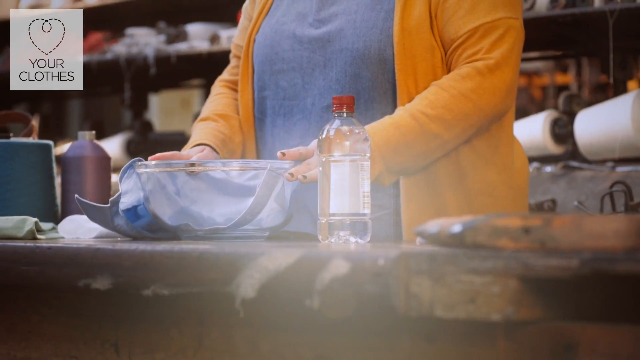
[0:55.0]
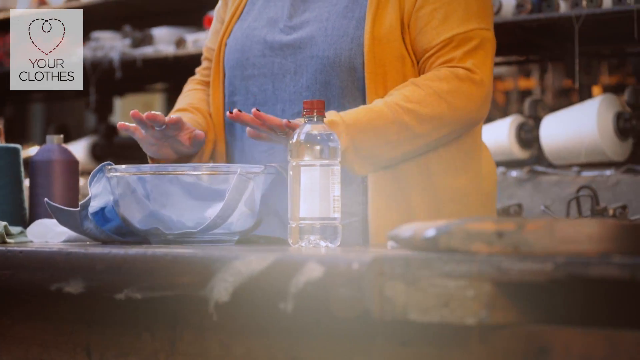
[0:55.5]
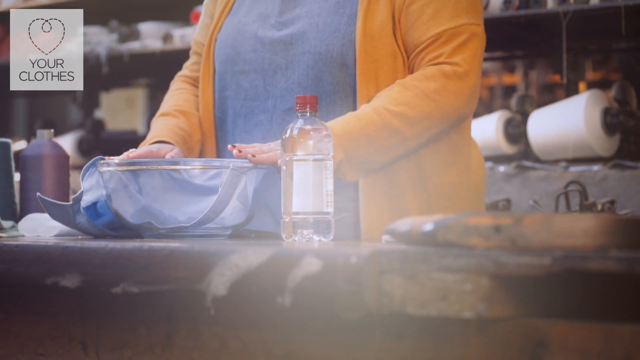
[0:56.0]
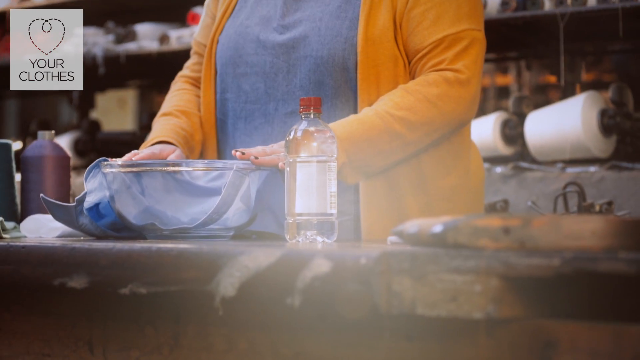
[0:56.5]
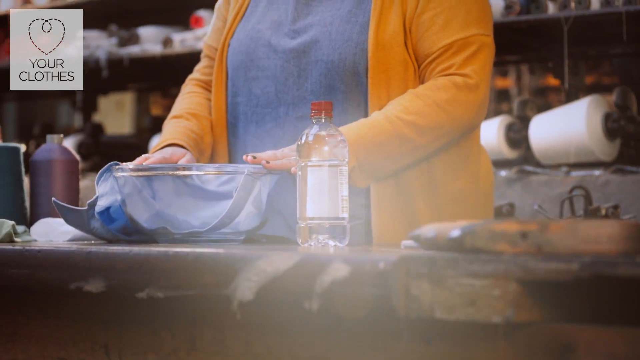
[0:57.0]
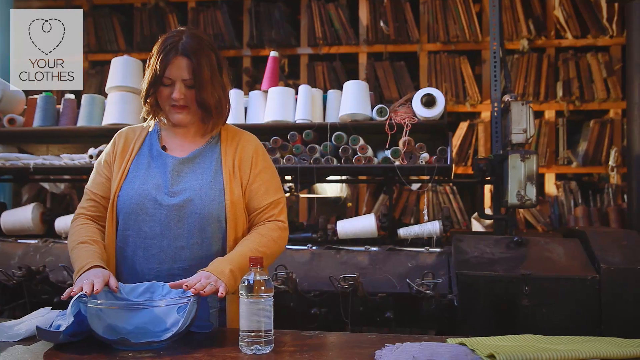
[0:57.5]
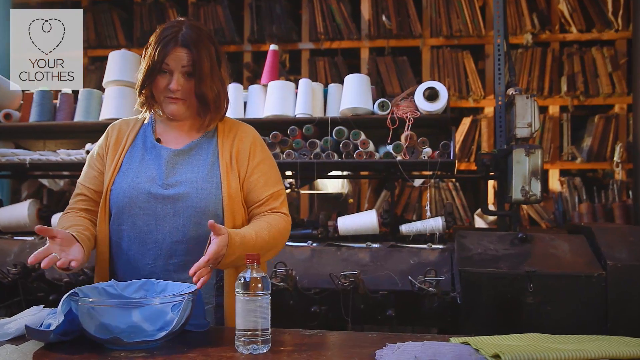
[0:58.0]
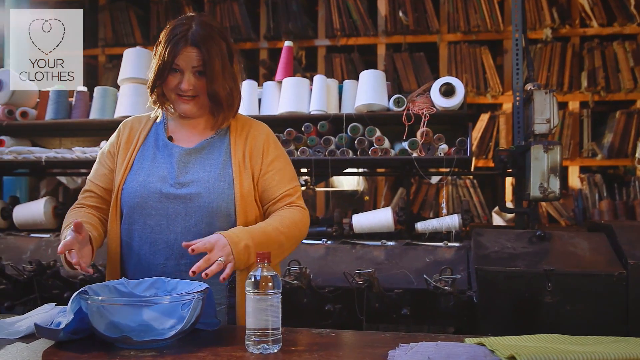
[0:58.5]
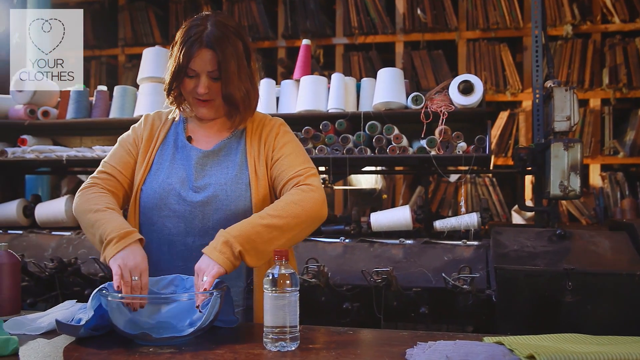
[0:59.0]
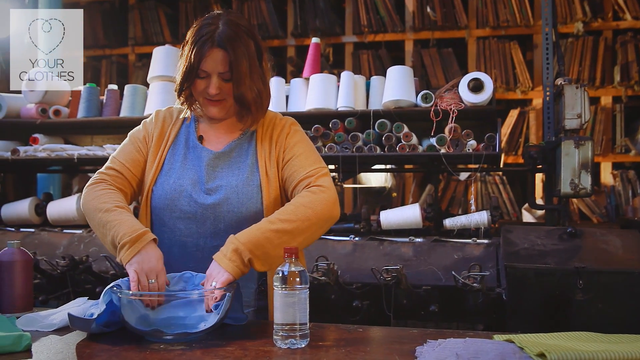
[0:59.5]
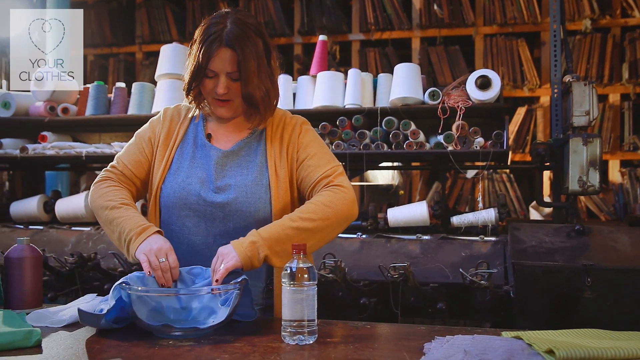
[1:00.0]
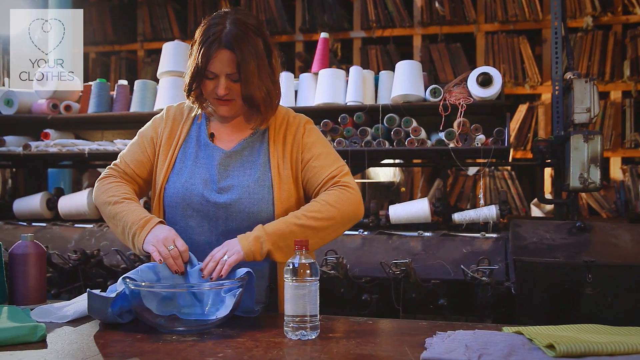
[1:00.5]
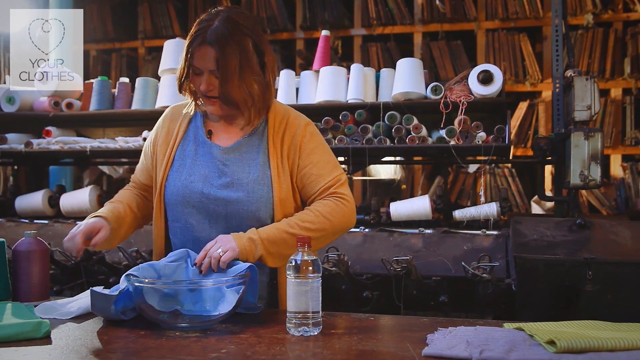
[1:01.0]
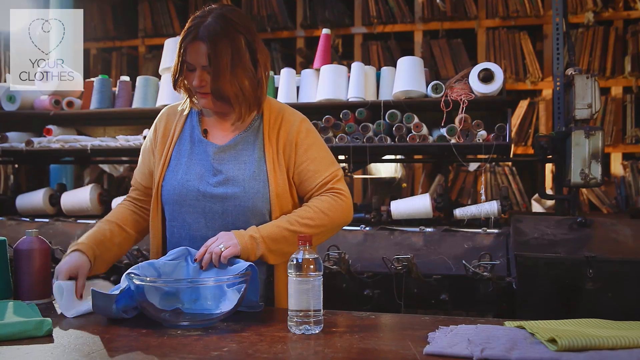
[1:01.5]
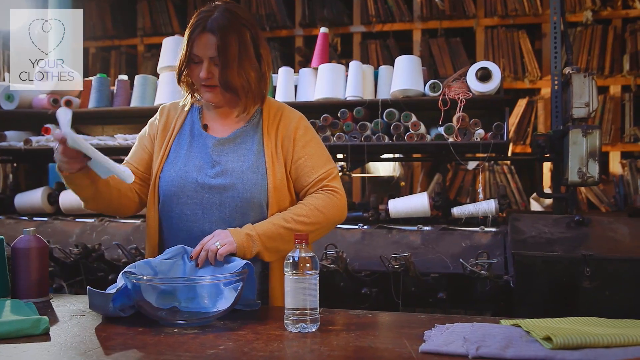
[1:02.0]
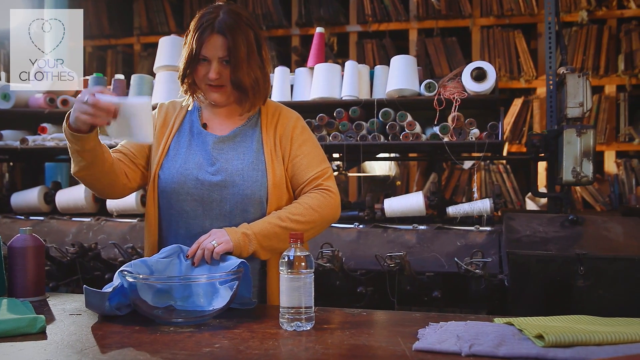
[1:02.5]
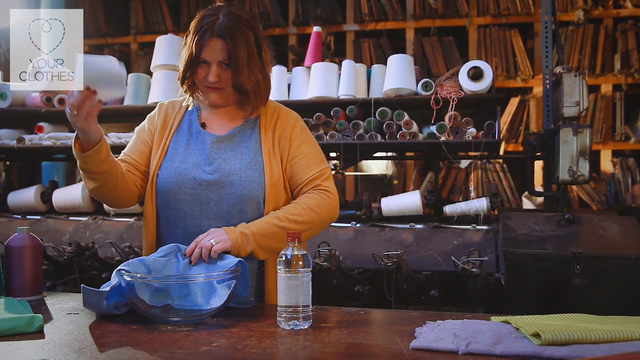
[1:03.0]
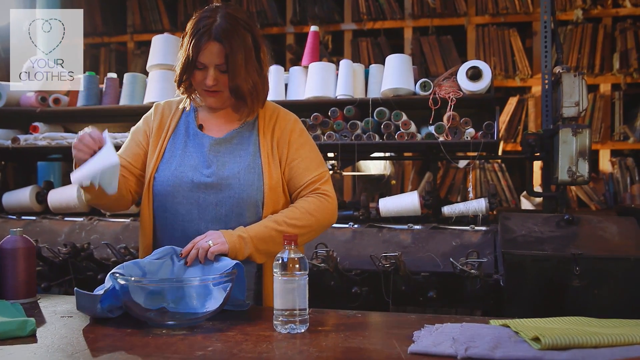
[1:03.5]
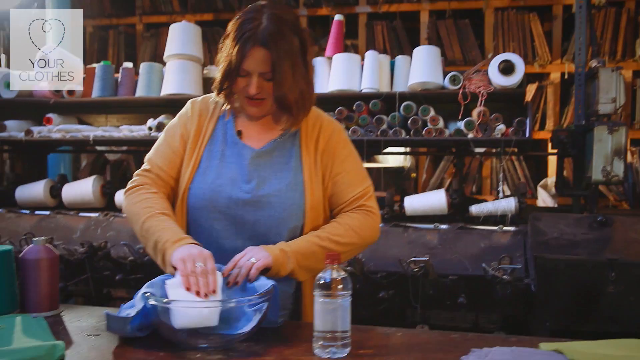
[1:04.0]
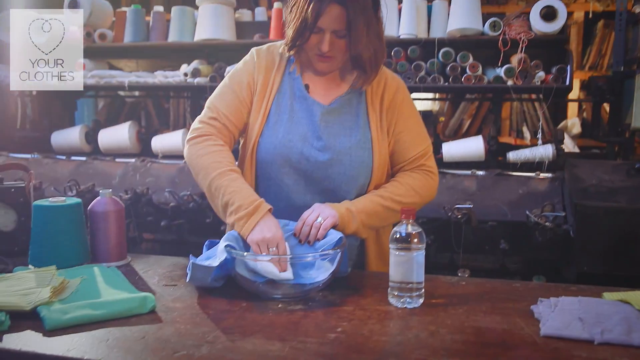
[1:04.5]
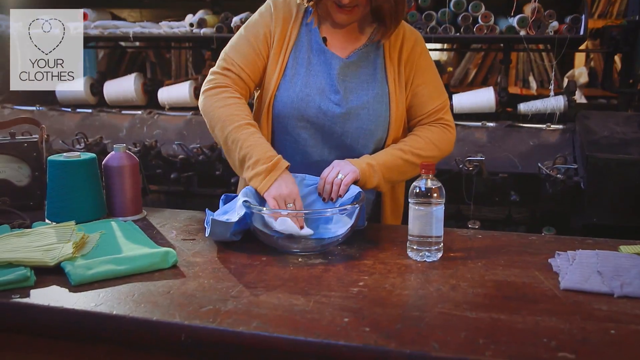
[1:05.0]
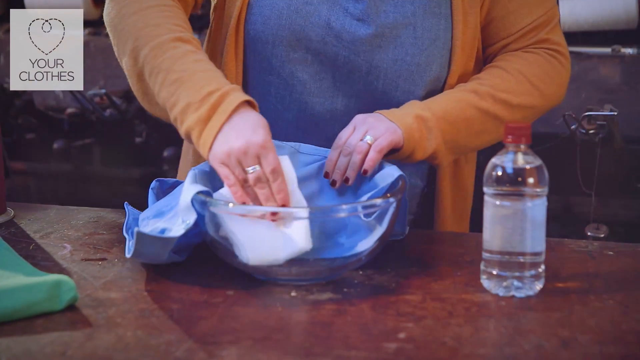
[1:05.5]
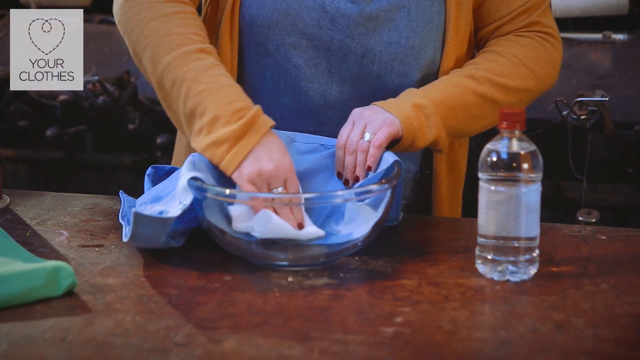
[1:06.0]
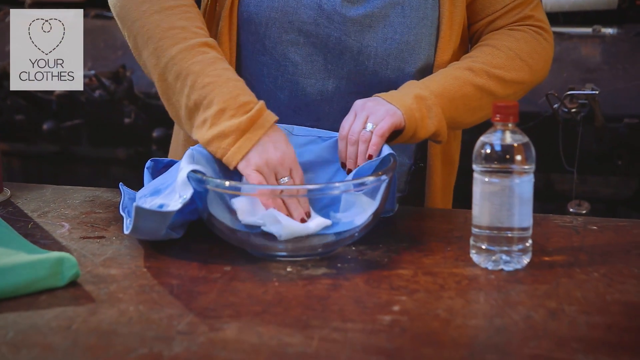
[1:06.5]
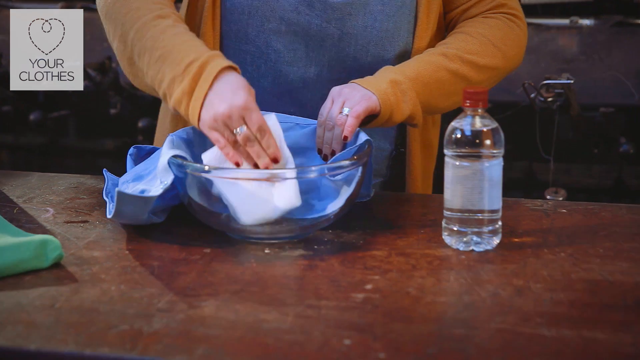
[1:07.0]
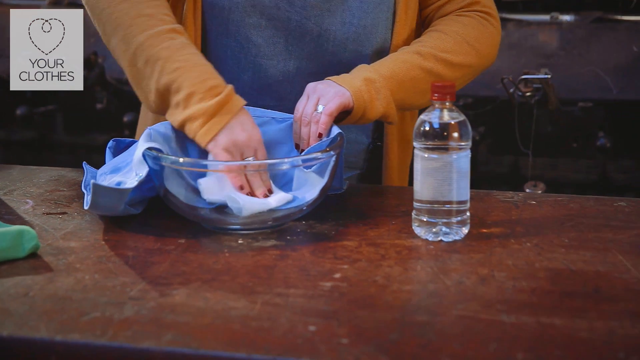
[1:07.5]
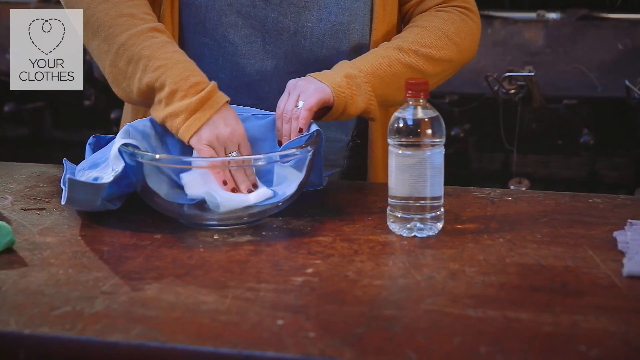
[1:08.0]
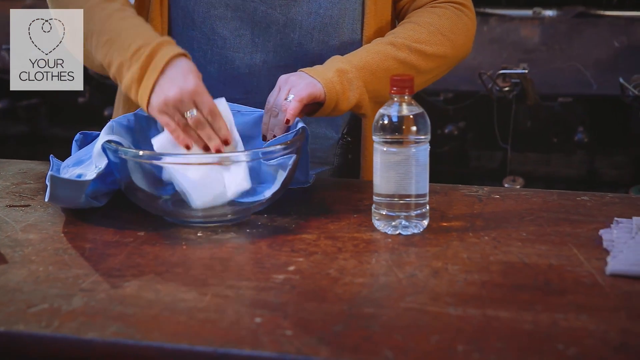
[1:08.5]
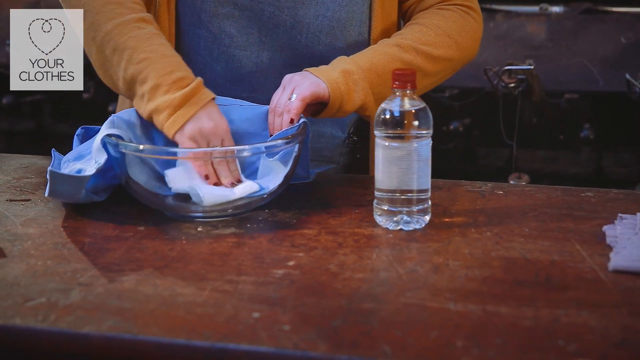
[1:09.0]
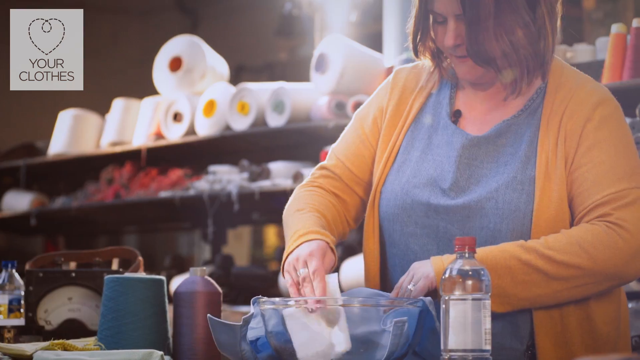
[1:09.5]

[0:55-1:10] The video appears to show an attempt to get a stain out of an article of clothing. A young woman with shoulder-length brown hair, wearing a long-sleeved yellow sweater with a blue top underneath, speaks toward the camera. In front of her is a bowl holding a blue piece of cloth or part of a shirt, saturated with liquid. Next to the bowl is a clear bottle with no label and a red cap. She pulls the material back a little in the bowl, grabs a clean white cloth lying off to her side, folds it up in one hand and blots at the area where the stain would be. She does not rub or scrub the material but blots to pick up the liquid in the bowl and on the clothing. In the upper left-hand corner is a tag-style logo reading "Your Clothes".